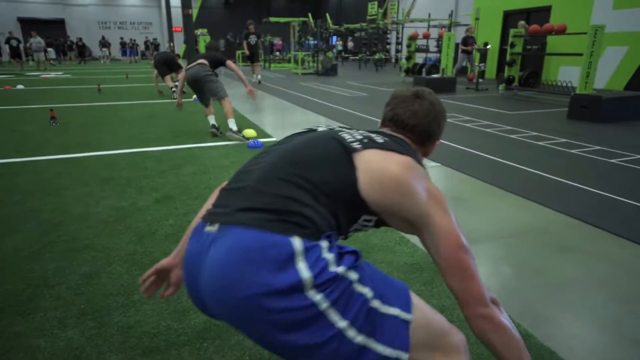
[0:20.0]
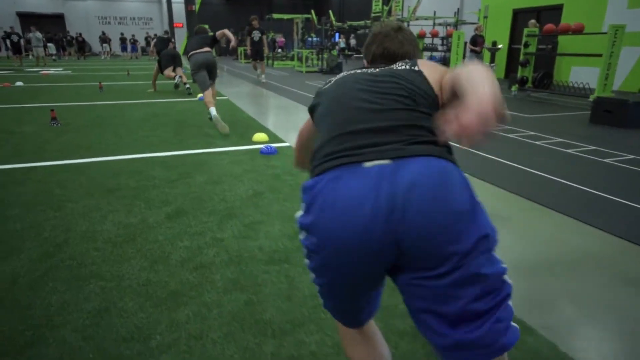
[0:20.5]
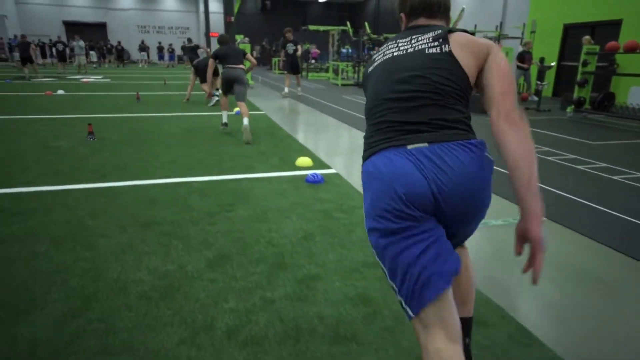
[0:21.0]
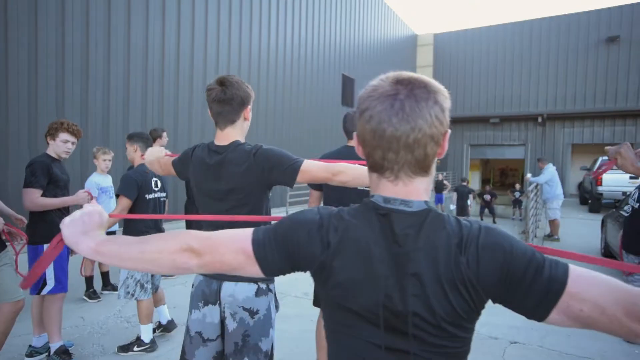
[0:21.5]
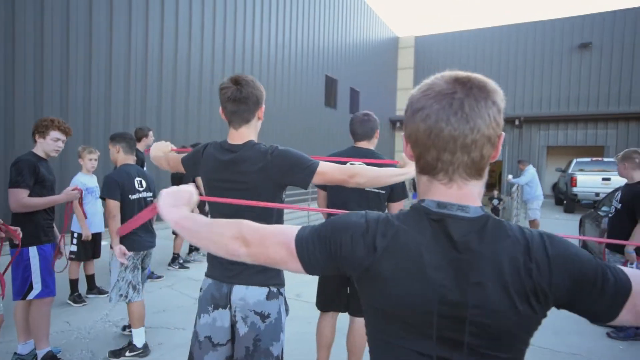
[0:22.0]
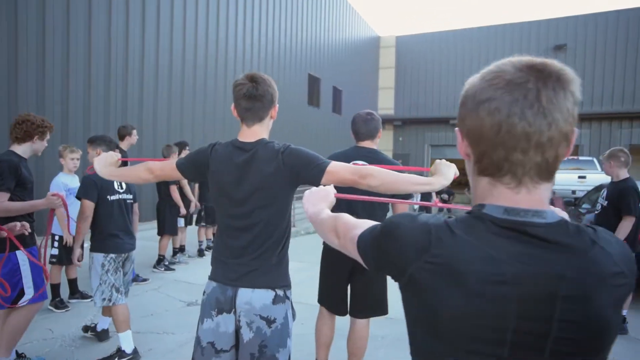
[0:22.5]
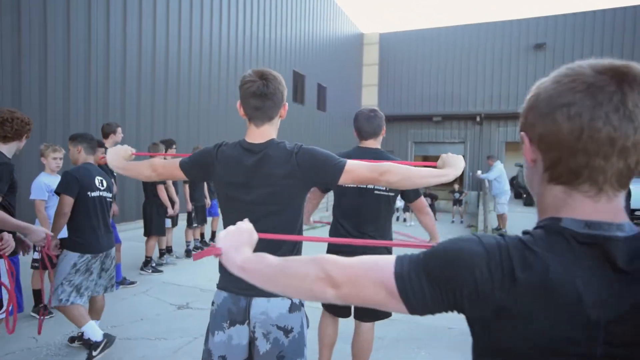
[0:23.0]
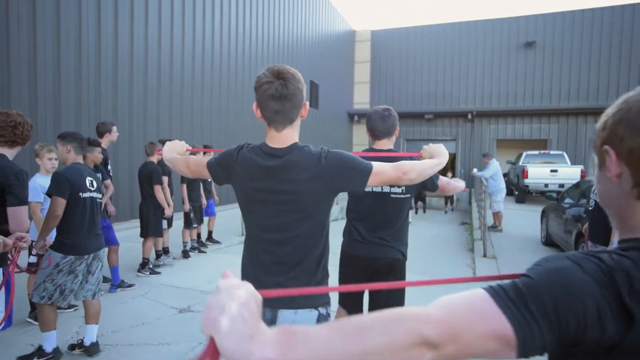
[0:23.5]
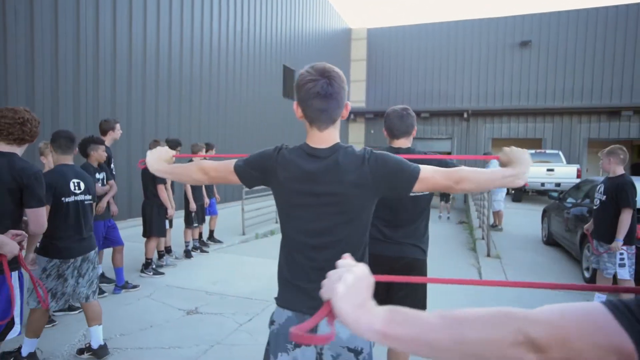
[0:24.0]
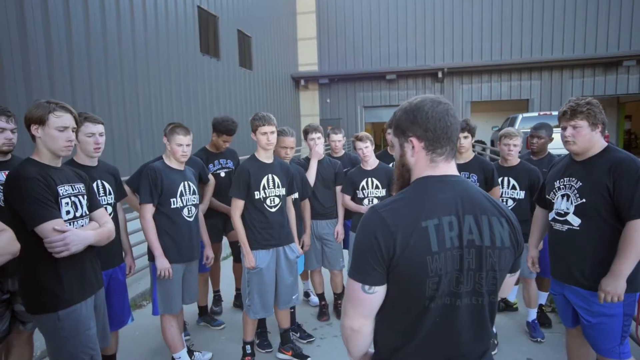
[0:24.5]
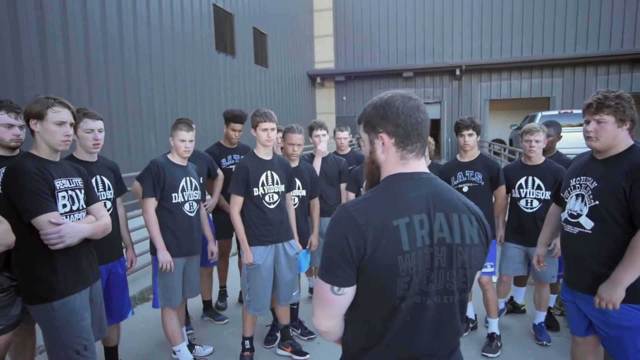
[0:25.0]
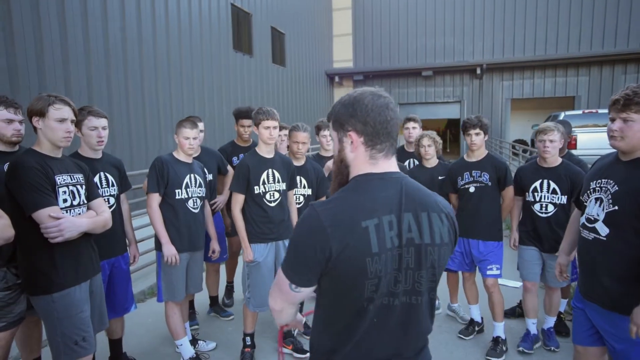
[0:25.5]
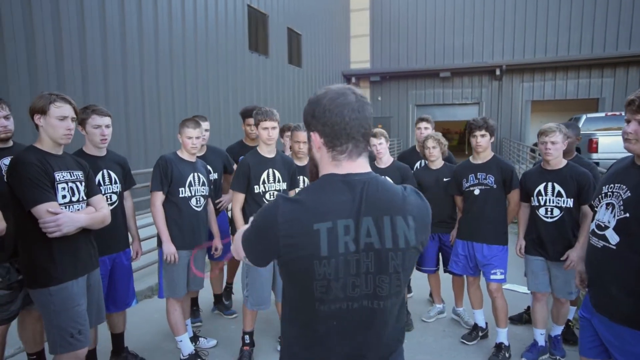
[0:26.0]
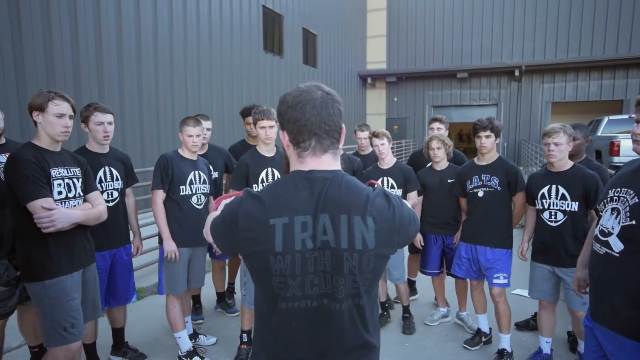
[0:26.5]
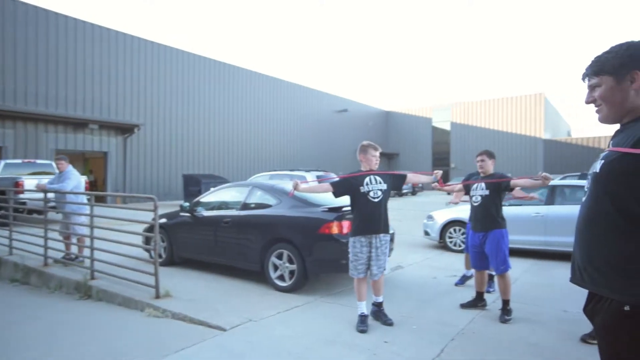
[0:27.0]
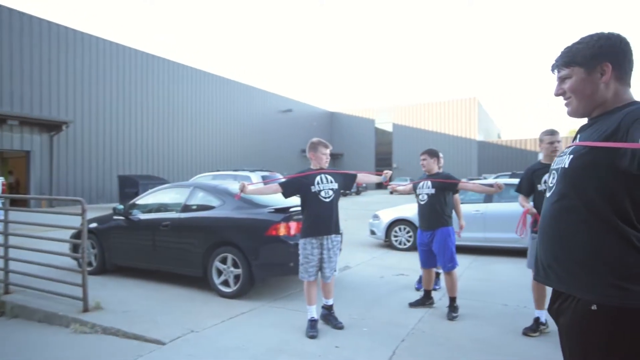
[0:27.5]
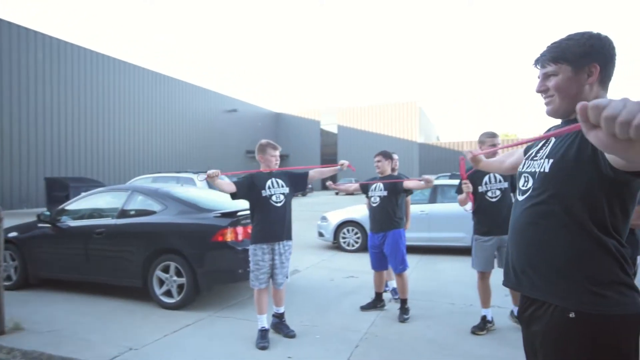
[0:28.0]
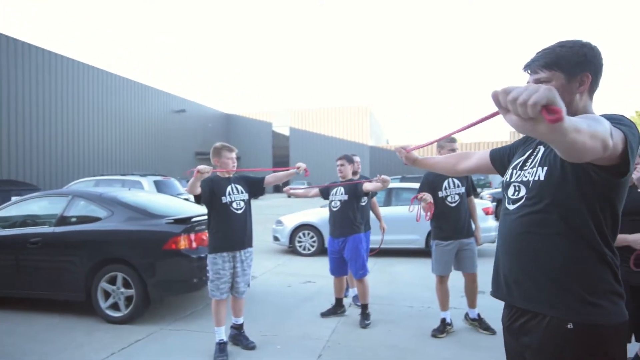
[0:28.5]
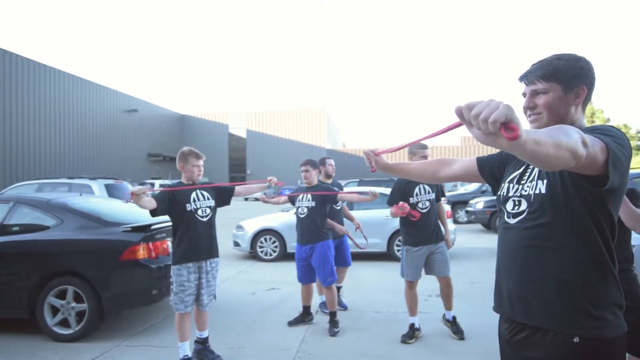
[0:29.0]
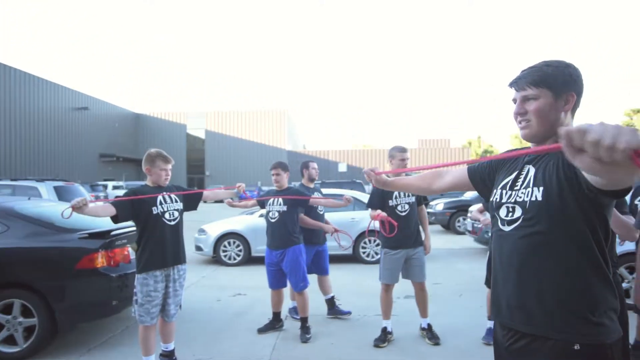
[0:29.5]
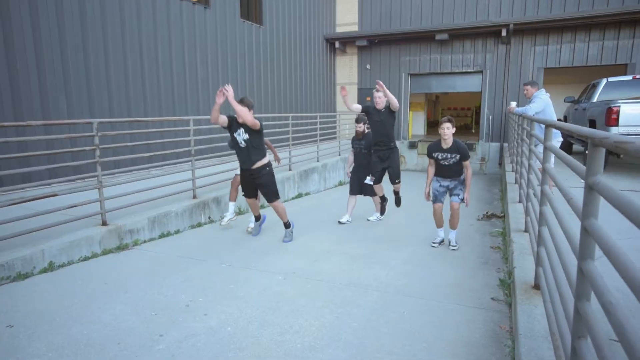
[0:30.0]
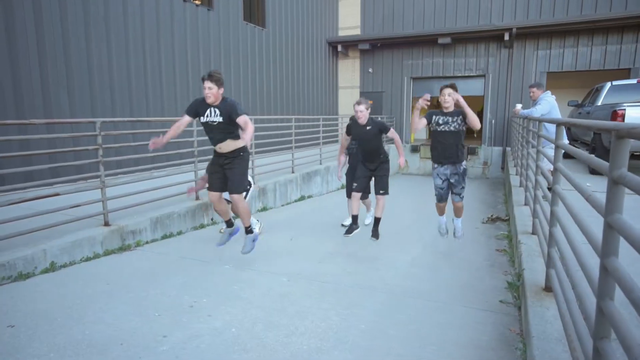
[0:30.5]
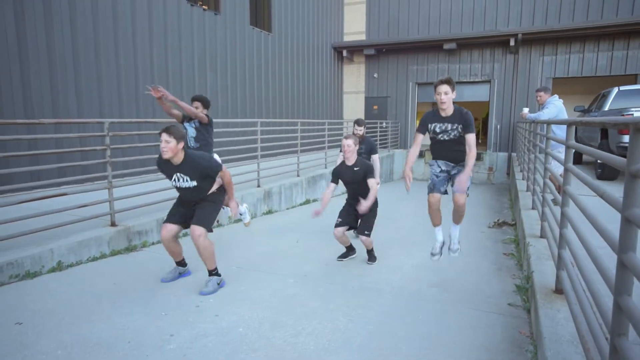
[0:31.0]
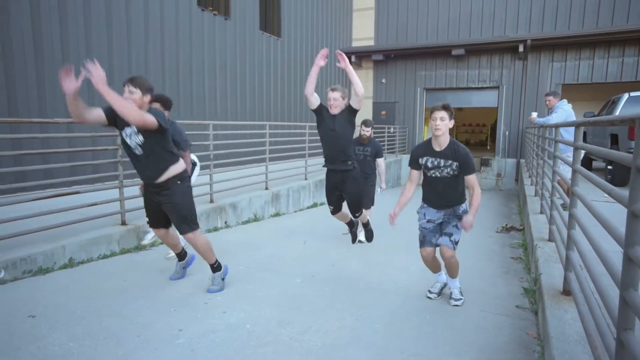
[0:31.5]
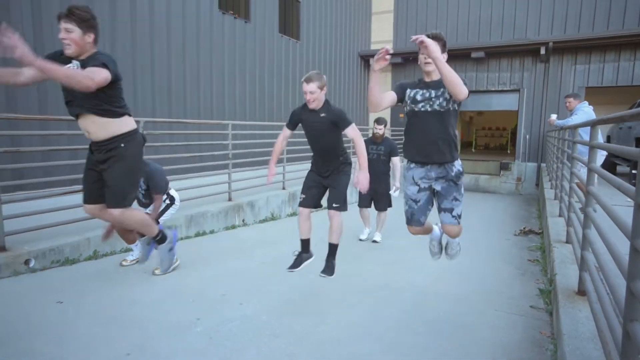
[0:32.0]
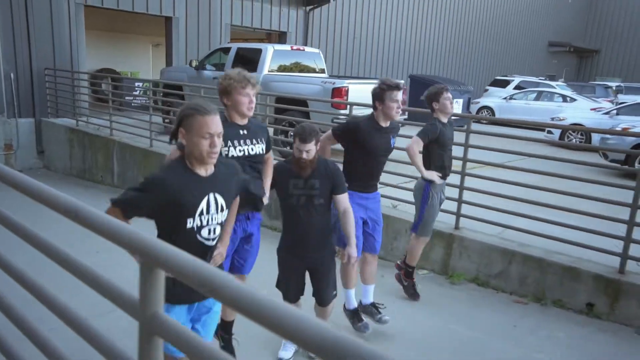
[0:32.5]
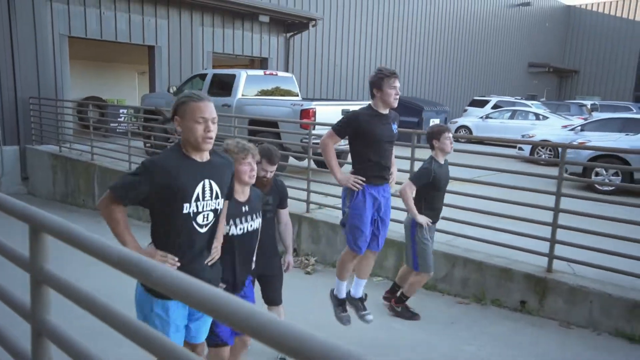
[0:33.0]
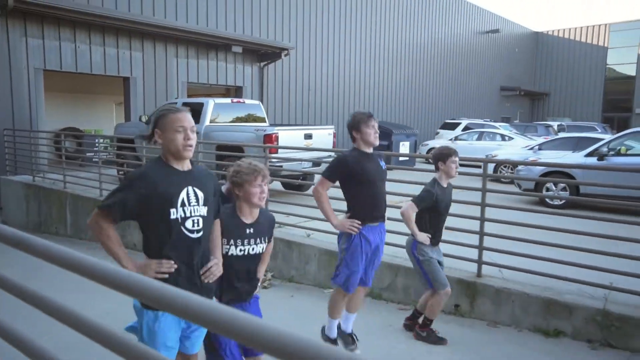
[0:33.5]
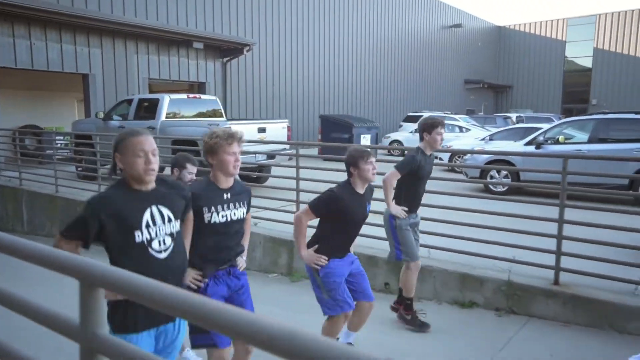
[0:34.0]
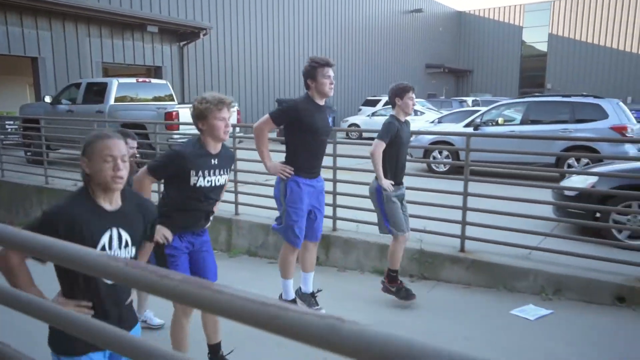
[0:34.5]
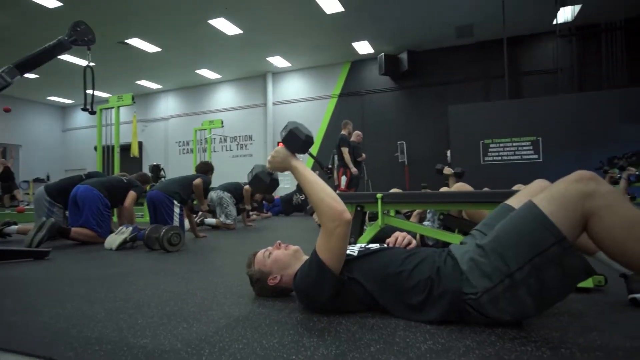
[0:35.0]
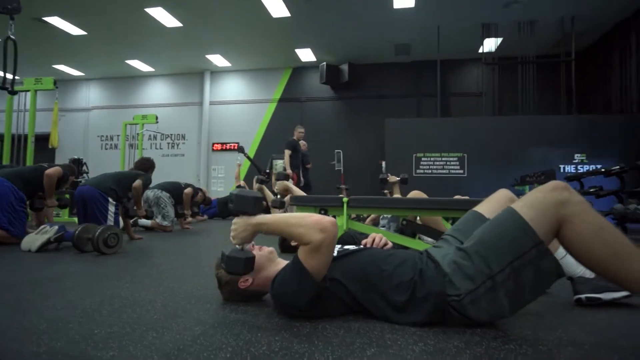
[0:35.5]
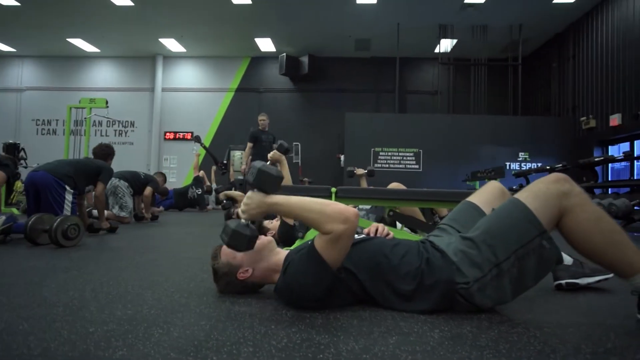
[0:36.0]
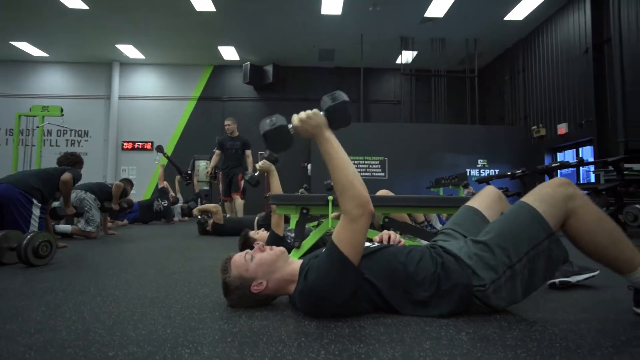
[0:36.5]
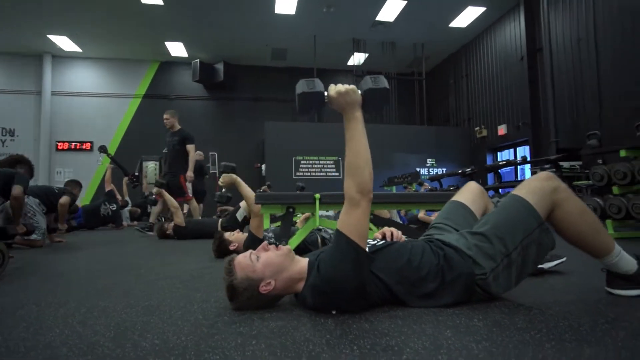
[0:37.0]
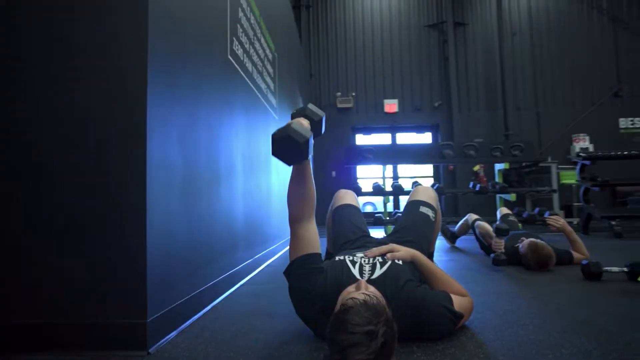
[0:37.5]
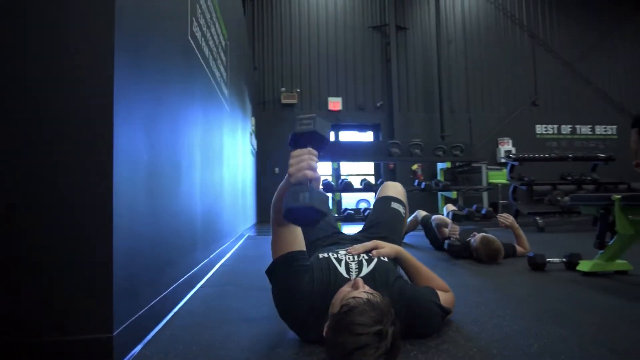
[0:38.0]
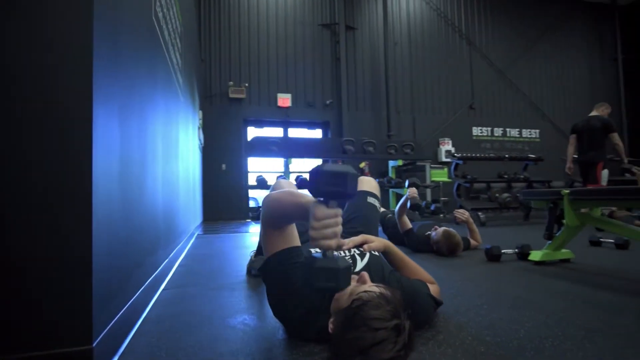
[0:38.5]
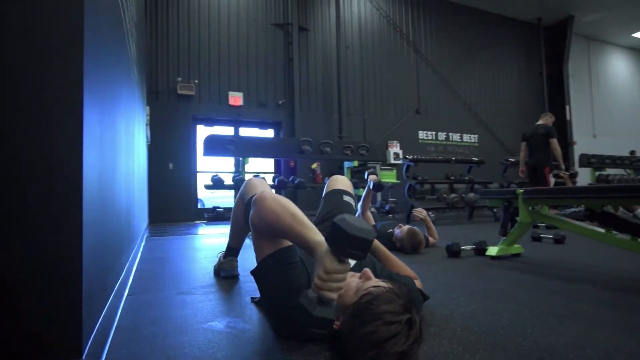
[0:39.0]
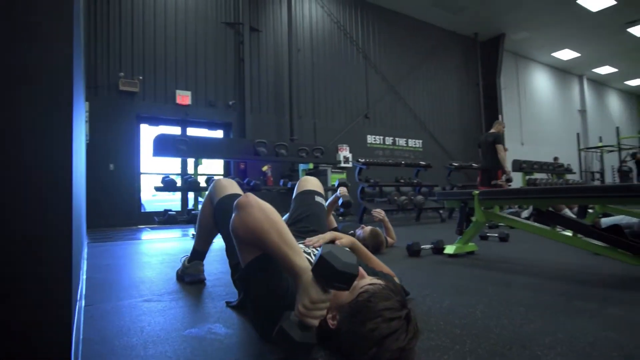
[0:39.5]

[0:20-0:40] The young men run and touch things in football drills on the green floor with yard lines painted on it. The scene moves outside a large metal building, where some young men wait on the sidelines while others hold red resistance bands with their elbows extended, pulling the bands wide and then letting them go back together. The boys then stand in the same place outside, all turned to face a man in a black t-shirt that says "train," who speaks to them and shows them the resistance band. A different angle shows some of the young men pulling on the red resistance bands with their elbows extended. Outside the building, some of the young men come up the incline of a loading dock, hopping and throwing their hands up very high. From the opposite angle, five of them come up the incline with their hands on their hips, hopping. The video then returns inside the metal building, the gymnasium, where the boys work out, all with handheld barbells. Some lie on the floor pushing the barbells up from the floor, while others kneel on the floor lifting the barbells in a tricep exercise.